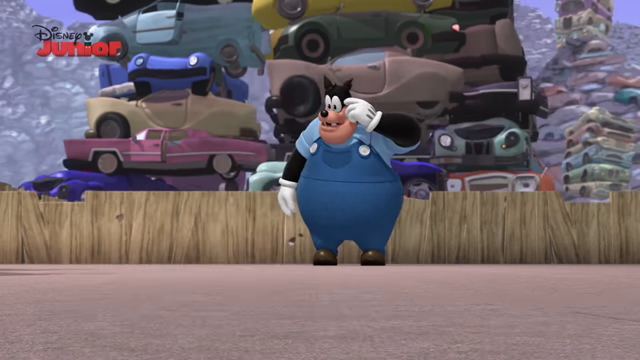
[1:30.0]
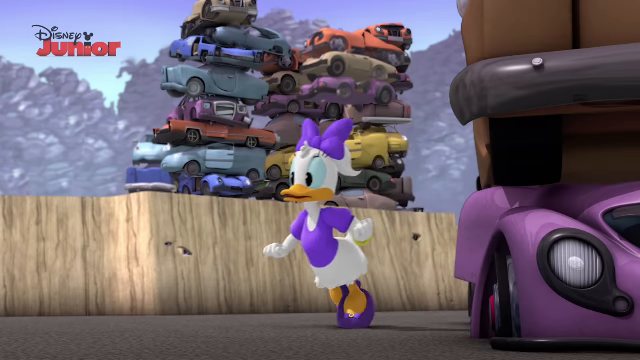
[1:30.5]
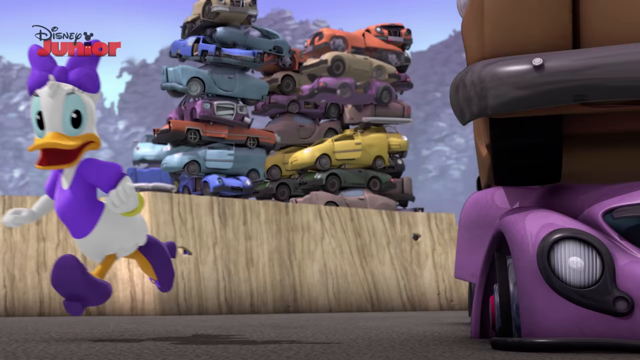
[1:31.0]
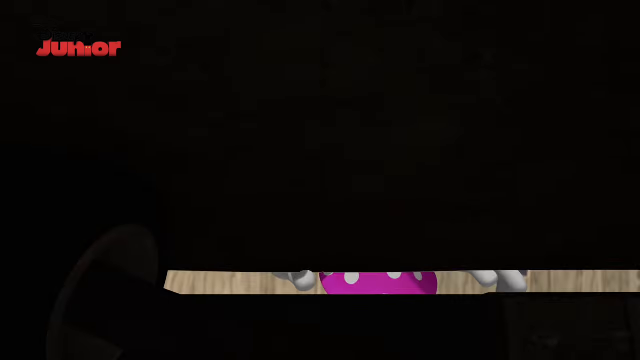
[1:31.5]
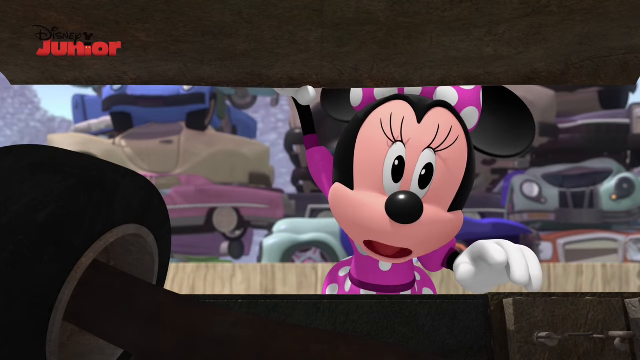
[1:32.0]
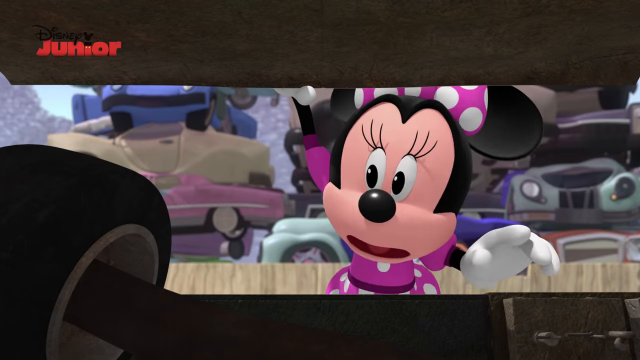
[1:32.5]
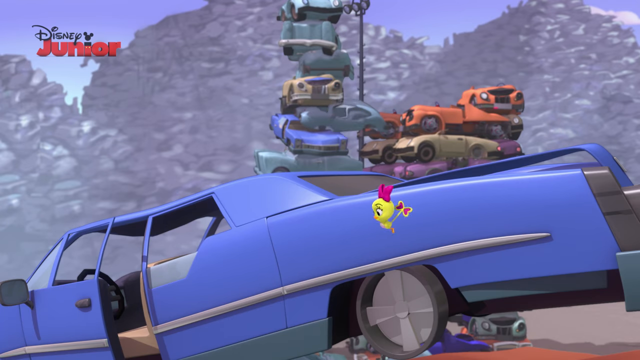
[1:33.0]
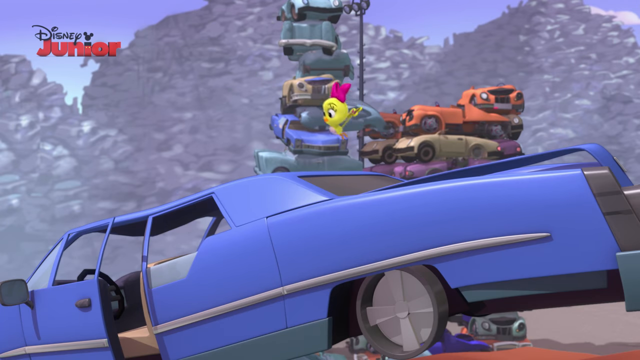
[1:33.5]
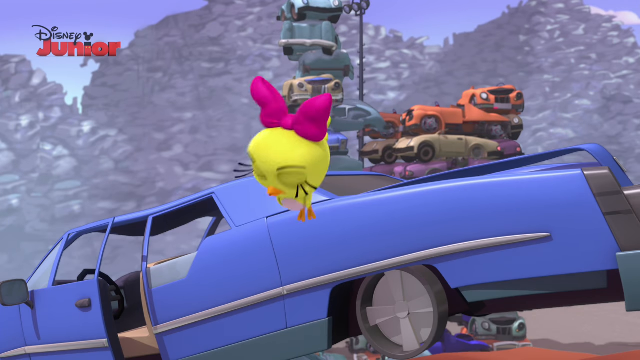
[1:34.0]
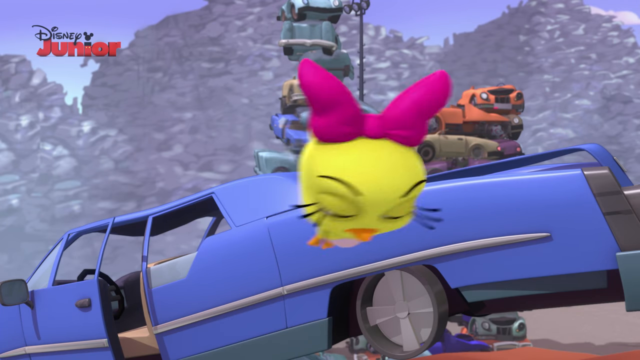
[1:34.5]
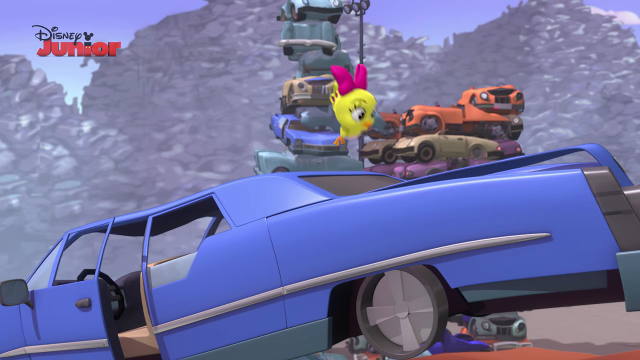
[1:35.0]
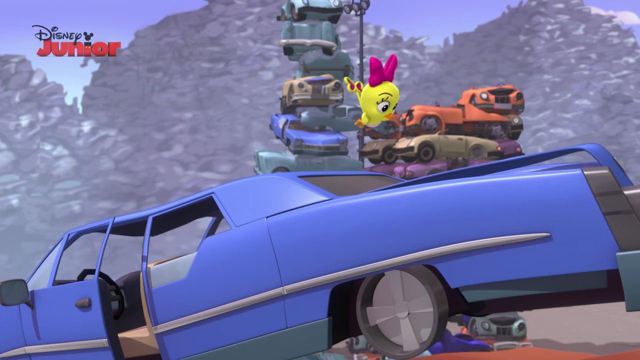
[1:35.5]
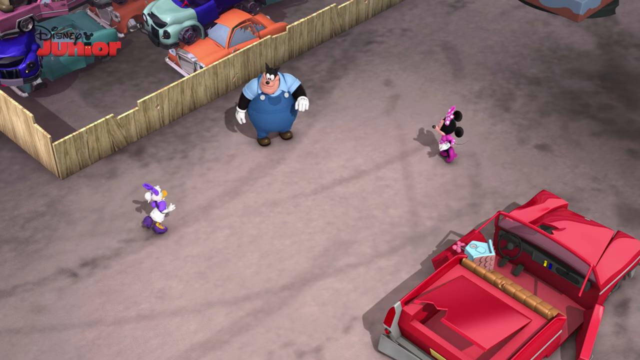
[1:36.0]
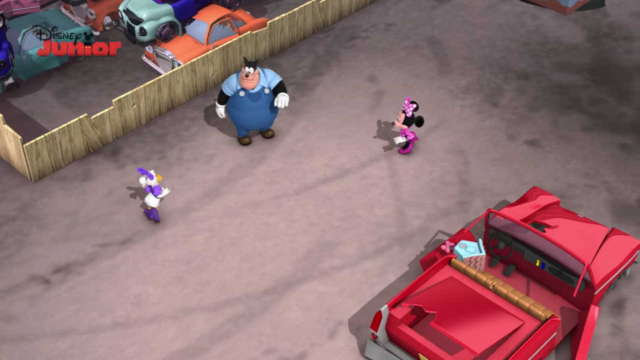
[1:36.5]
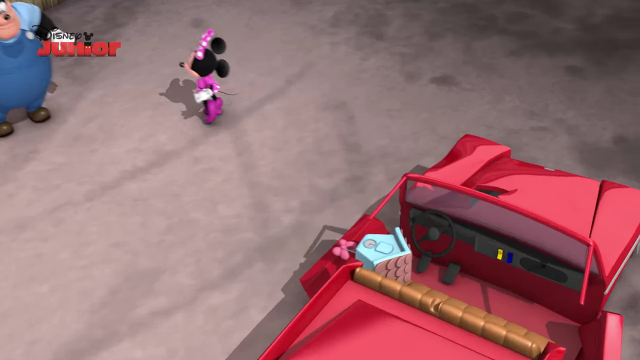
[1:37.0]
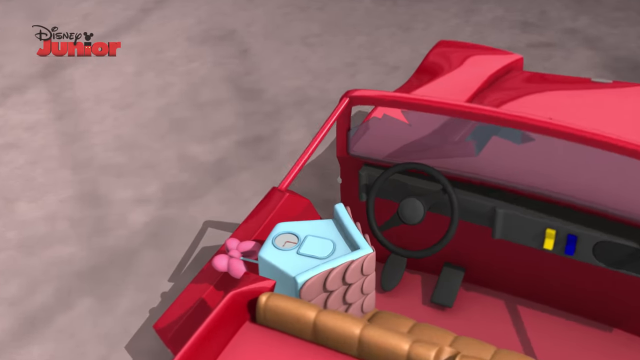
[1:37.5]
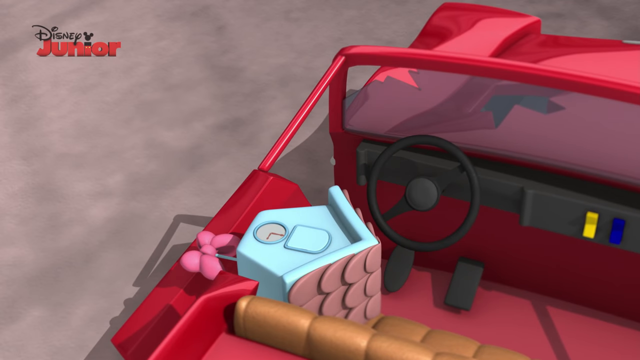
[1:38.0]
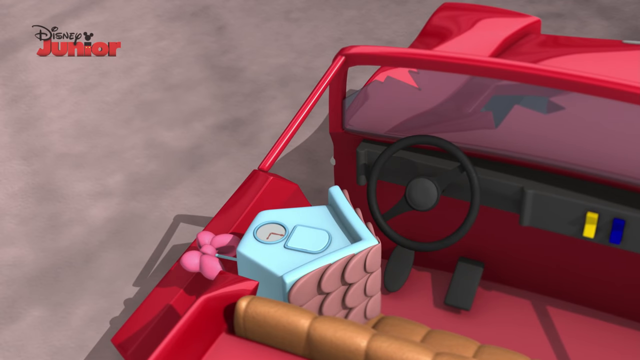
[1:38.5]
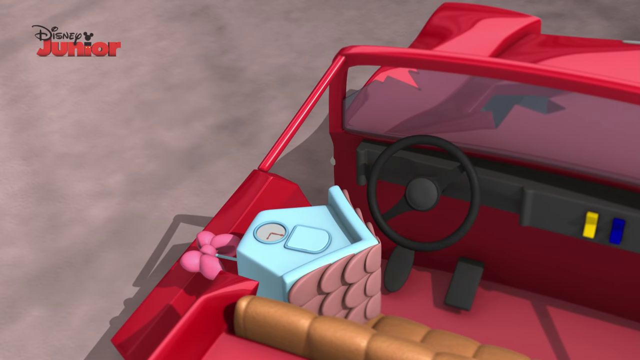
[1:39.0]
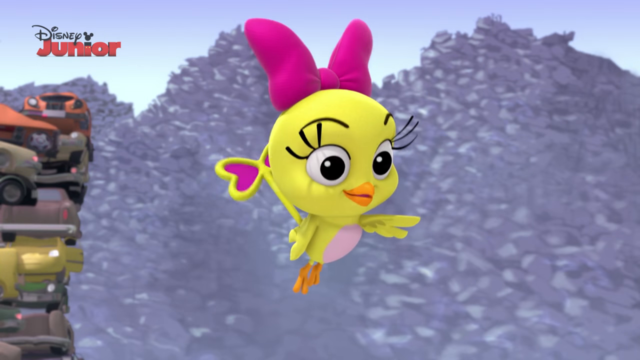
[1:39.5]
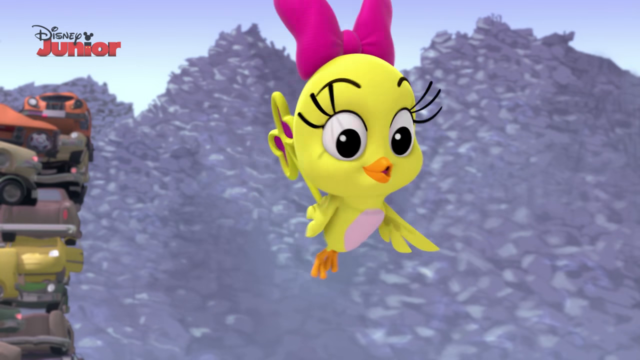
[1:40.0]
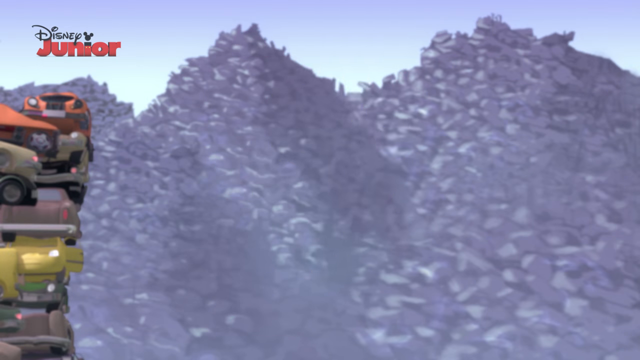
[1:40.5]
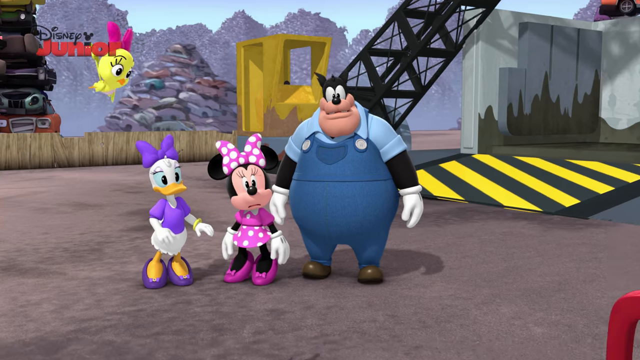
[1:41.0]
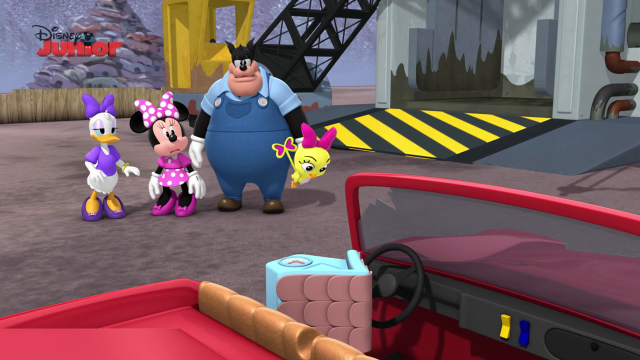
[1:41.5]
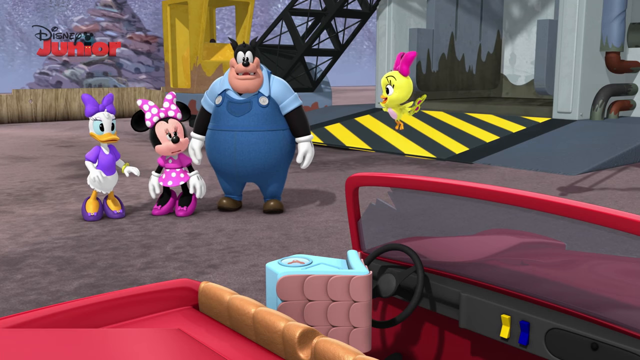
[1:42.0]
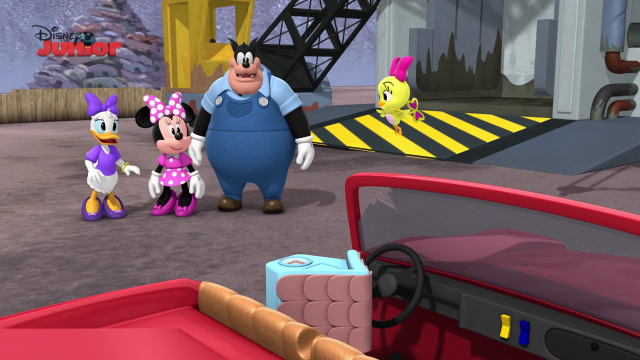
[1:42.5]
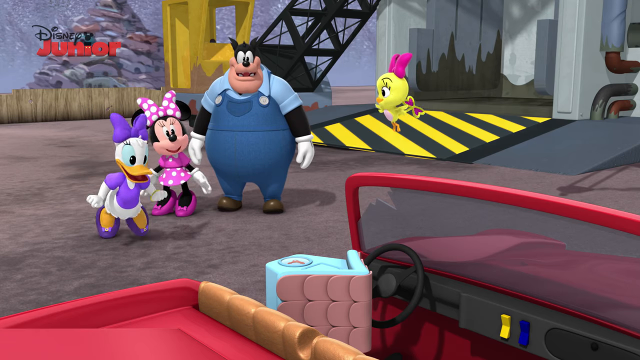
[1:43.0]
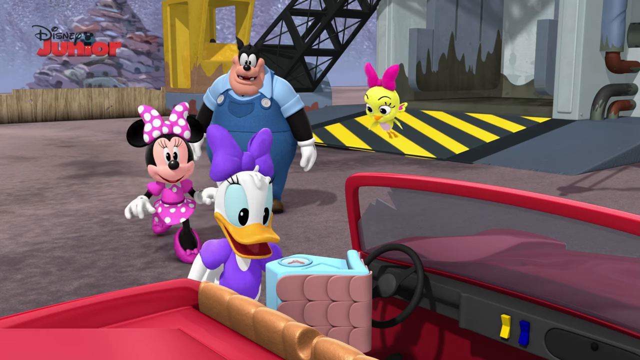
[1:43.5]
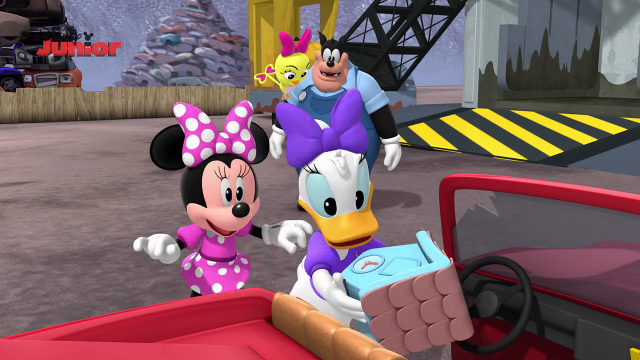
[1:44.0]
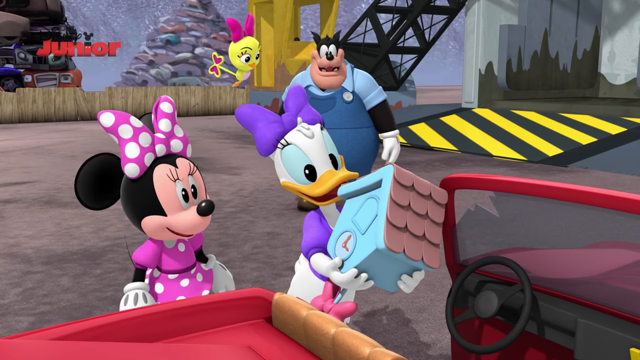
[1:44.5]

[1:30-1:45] The characters are all looking for something. Daisy runs from the right side of the screen toward the left between mounds of stacked-up cars. The screen turns completely black and then cracks open, as if the camera were hidden in the trunk of a car and Minnie were opening it. A close-up shows Minnie's face as she searches the trunk, with a tire on the left side of the screen. Minnie apparently doesn't find what she's looking for and closes the lid, and the screen goes black. Next, the yellow cuckoo bird flies around searching a blue car; she flies up close, first to the left side and then to the right, facing the camera the whole time. Then an aerial view, like a drone shot, looks down on the junkyard. Pete stands where he was left, Daisy approaches him from the left and Minnie from the right, and they seem to be explaining that they have not found what they're looking for. In the bottom right corner of the screen is a red convertible, and in its driver's seat is the blue cuckoo clock, not destroyed and apparently what they have been looking for. The camera zooms in on the blue cuckoo clock. The view changes to the yellow cuckoo bird hovering in the air, pointing very excitedly and happily; she has seen the blue cuckoo clock. She flies toward it in the convertible, drawing the attention of the other three characters. Minnie and Daisy rush toward the clock; Daisy arrives first and picks it up, holding it in her hands, while Pete looks very happy in the background.